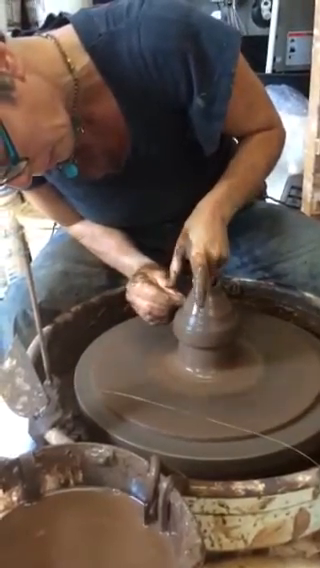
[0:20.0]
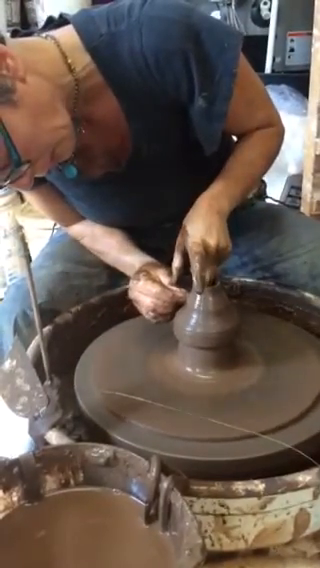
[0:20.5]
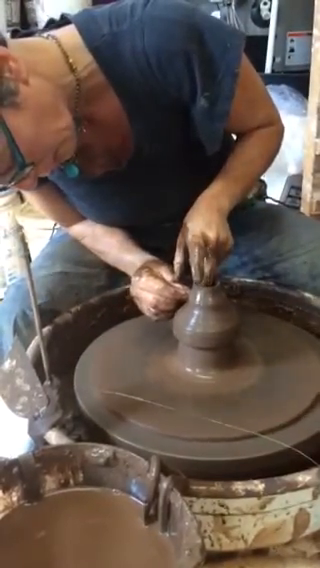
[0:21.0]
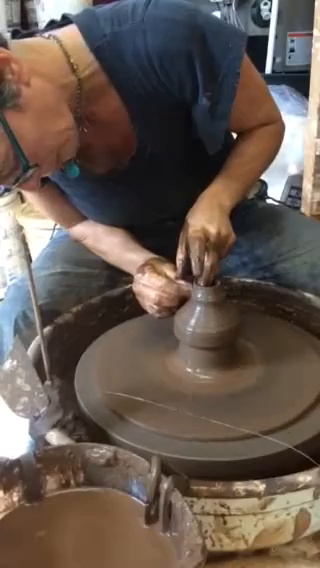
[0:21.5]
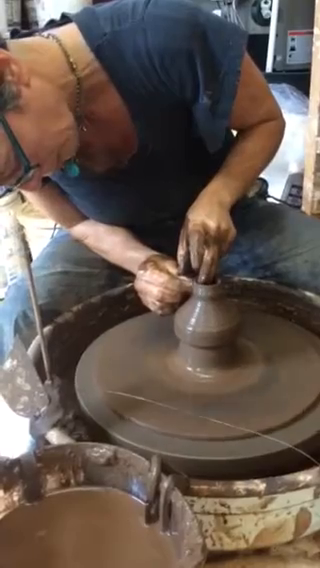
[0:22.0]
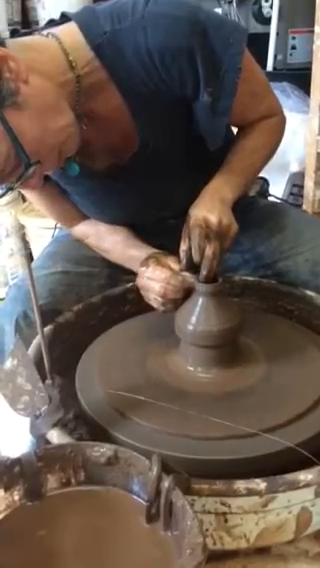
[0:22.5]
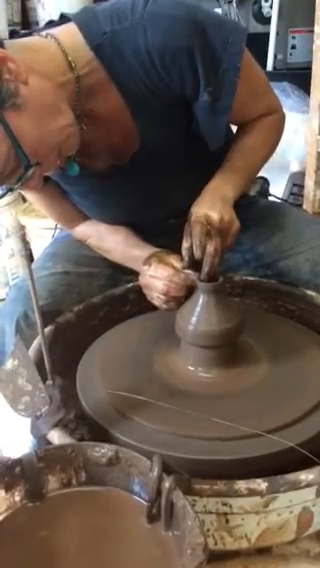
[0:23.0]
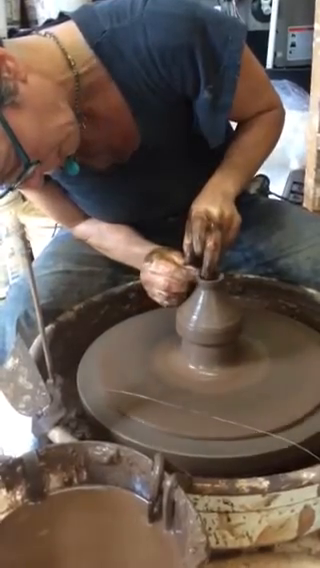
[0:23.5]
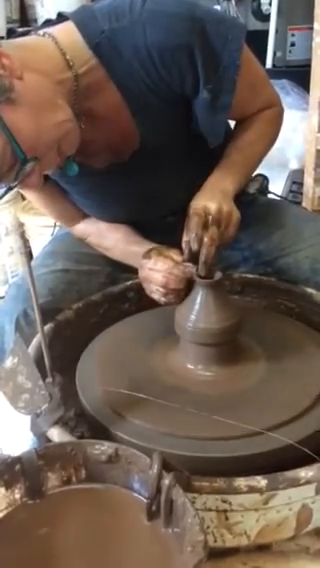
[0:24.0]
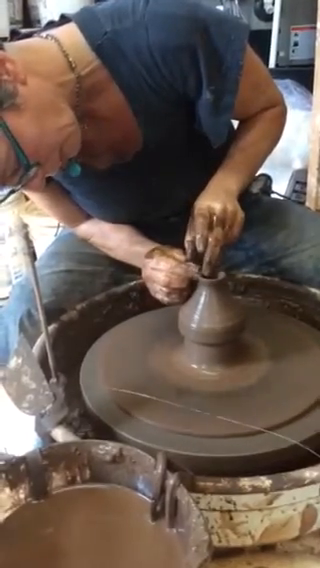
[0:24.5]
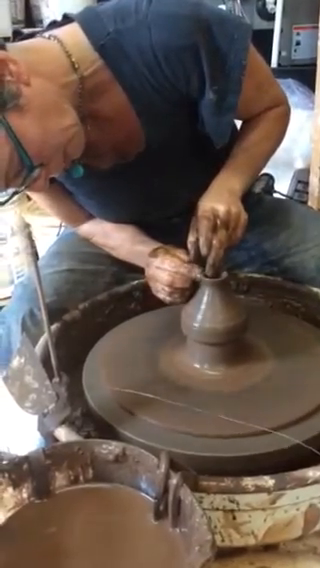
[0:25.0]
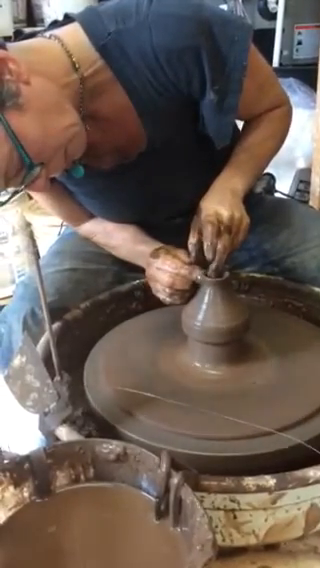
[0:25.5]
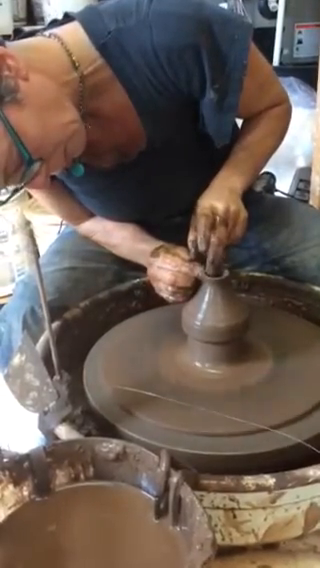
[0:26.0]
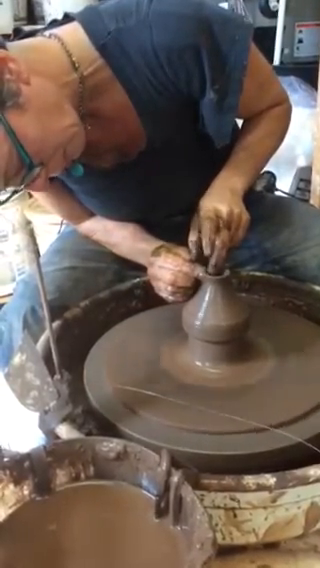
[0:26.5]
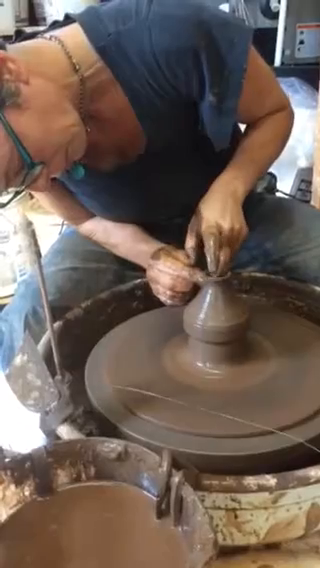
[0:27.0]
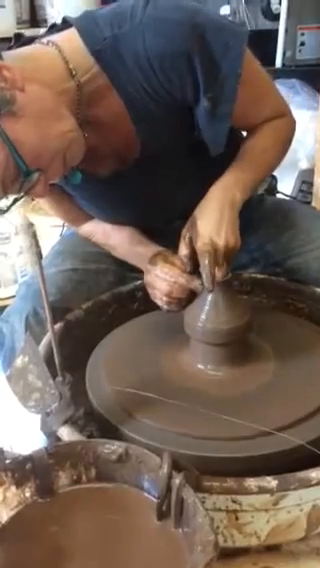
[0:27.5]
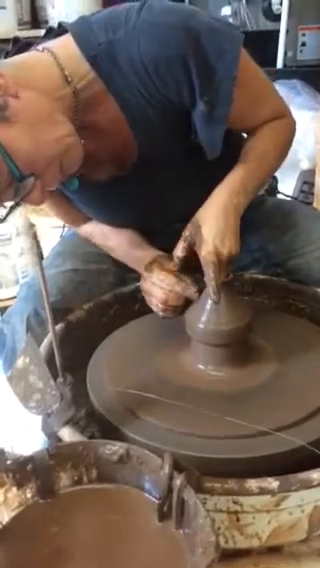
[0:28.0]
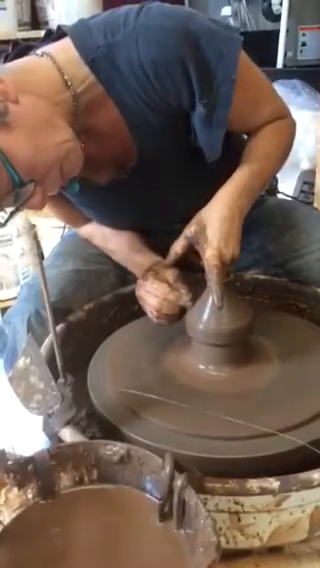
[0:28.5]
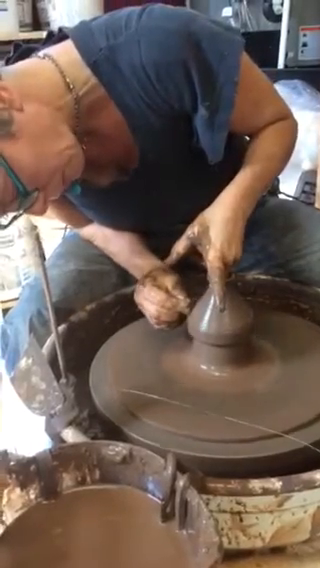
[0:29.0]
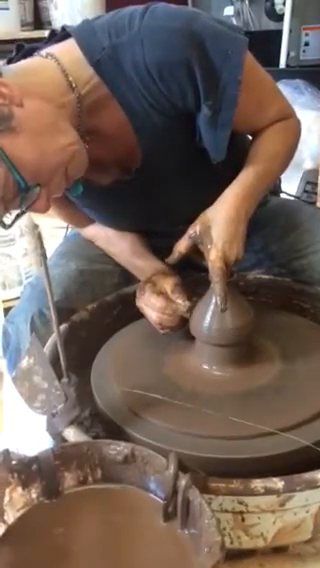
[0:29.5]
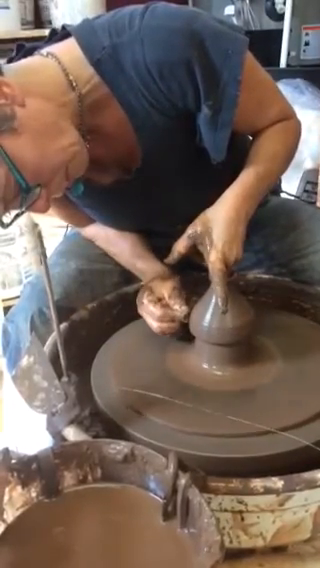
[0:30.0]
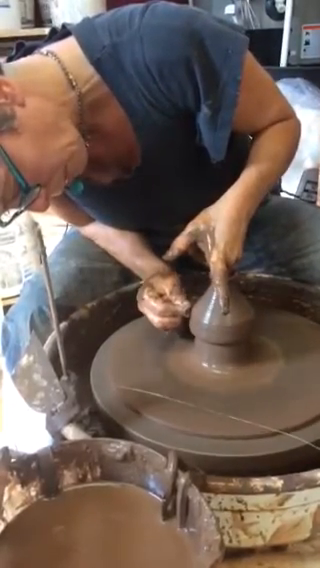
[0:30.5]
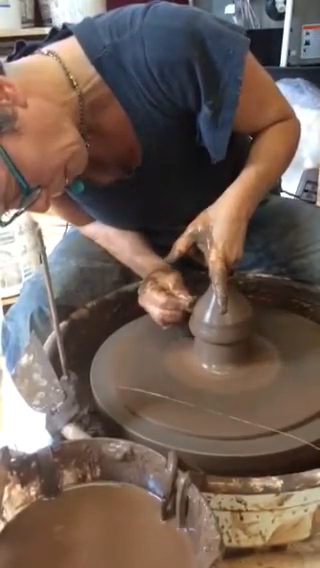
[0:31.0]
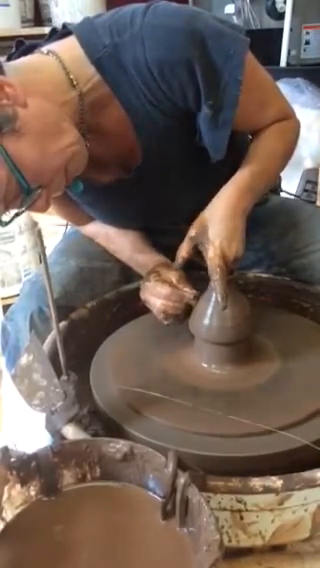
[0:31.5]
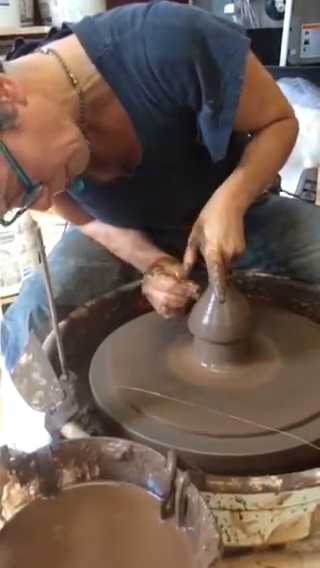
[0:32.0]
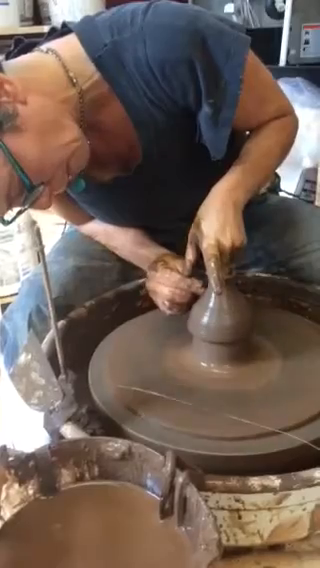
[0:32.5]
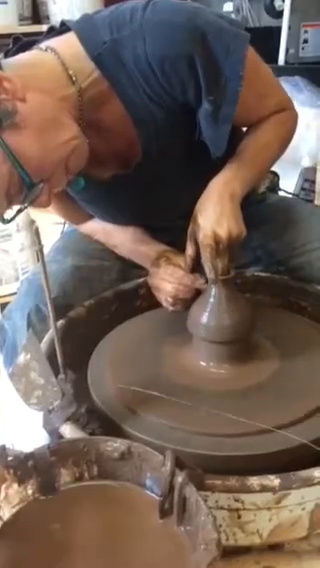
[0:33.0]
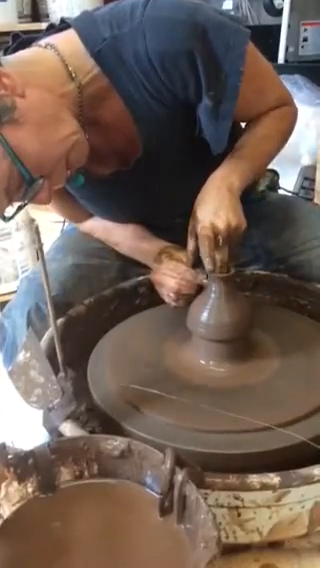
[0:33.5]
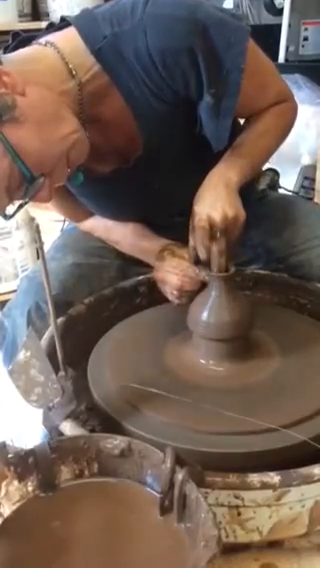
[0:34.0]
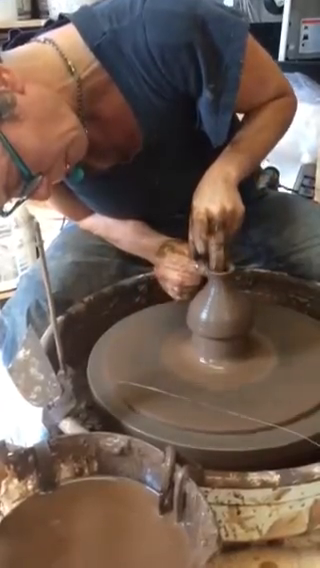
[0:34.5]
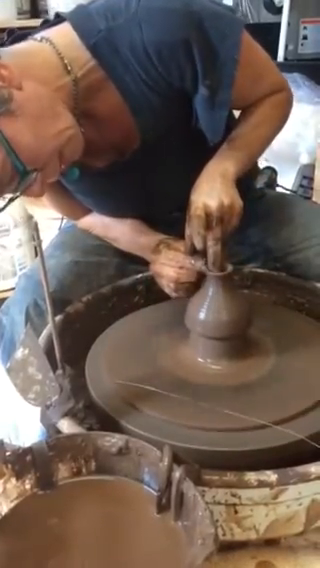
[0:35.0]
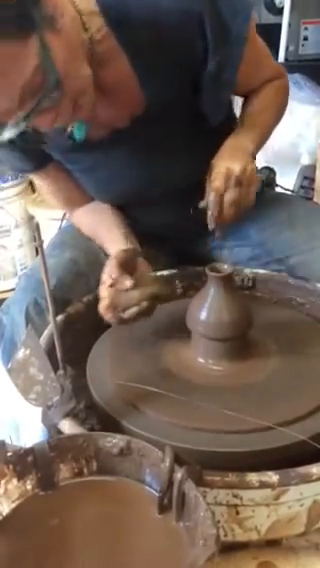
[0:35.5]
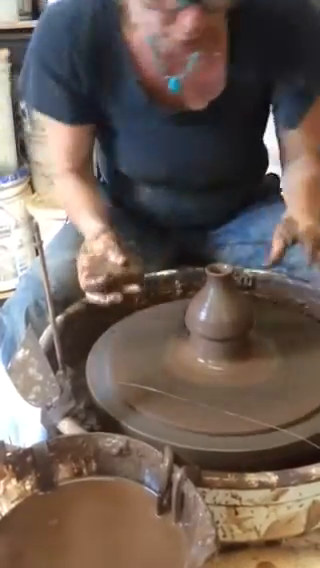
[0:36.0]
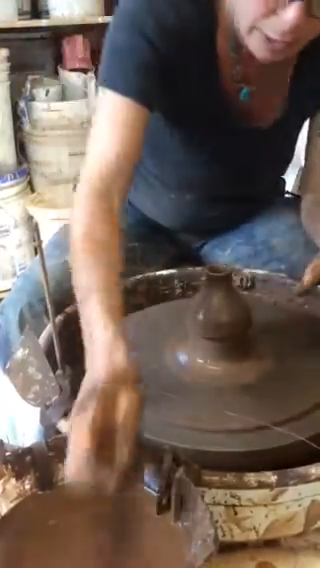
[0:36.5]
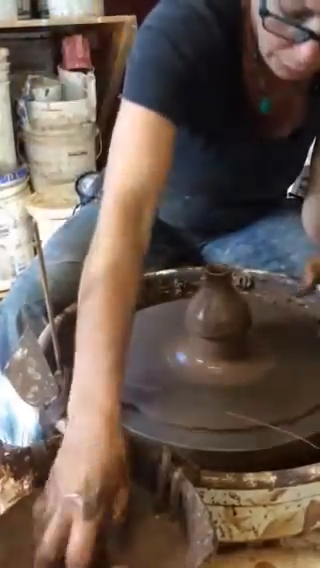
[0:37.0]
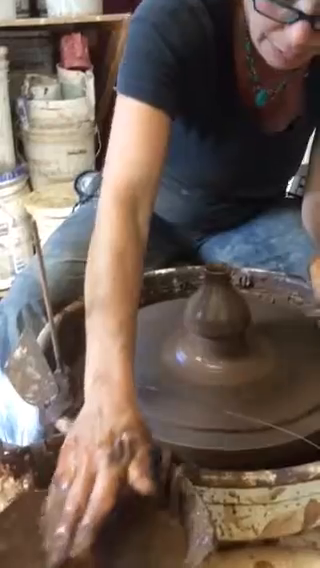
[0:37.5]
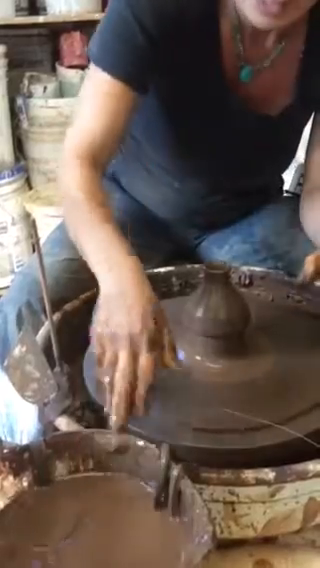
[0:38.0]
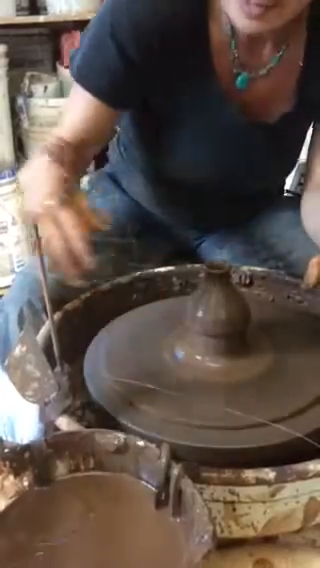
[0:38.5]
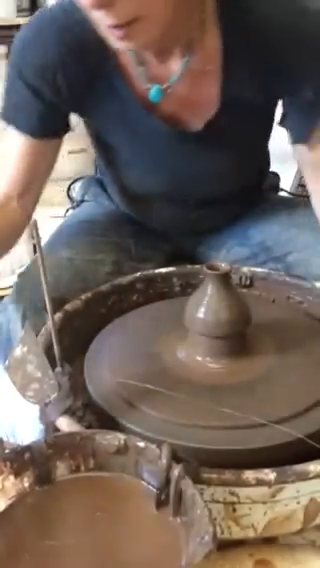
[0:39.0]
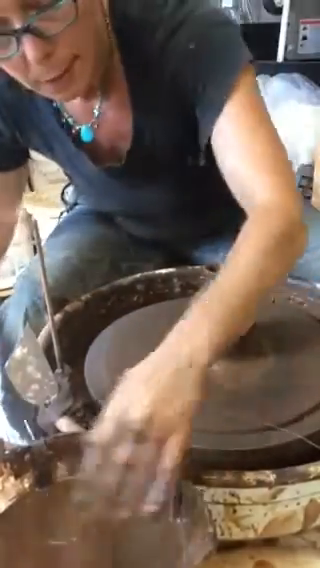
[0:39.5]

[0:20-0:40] The same woman, in a navy blue shirt and denim jeans, is still leaned over the pottery wheel. She sits on a stool and carefully molds and shapes the pottery with her hands as the wheel spins quickly, the clay going where she wants it. She takes some sort of sponge and applies light pressure to the sides of the clay. The item on the wheel takes shape and seems to be a vase. Still explaining as she works, she eventually places the sponge she has been using into the tub of water, which is brown from clay. She drops the sponge in and looks like she is reaching around for something. Her hands are covered in wet clay.